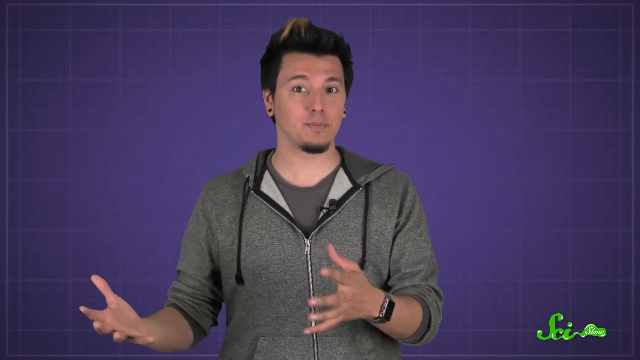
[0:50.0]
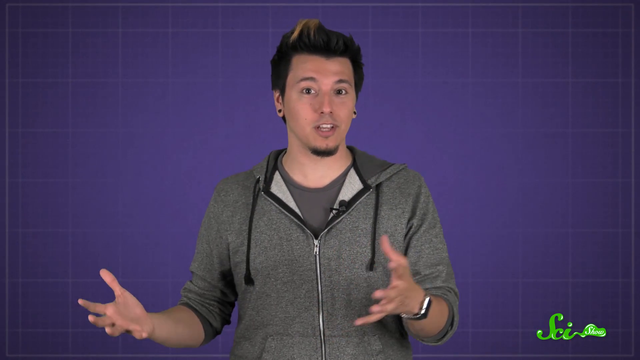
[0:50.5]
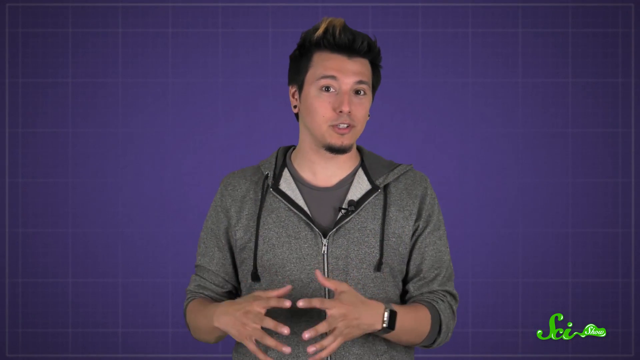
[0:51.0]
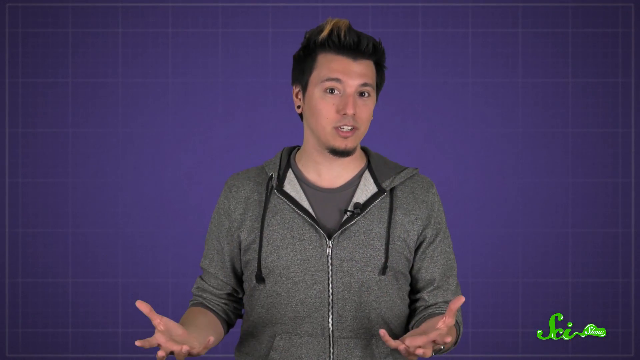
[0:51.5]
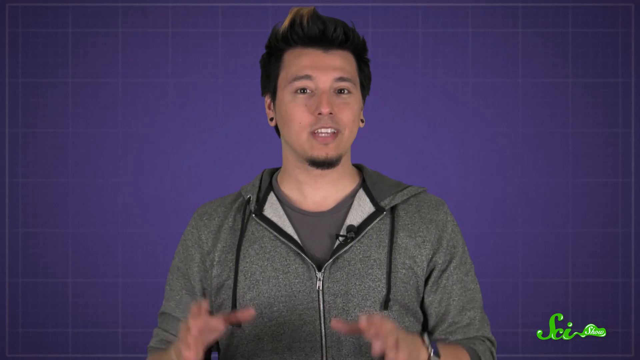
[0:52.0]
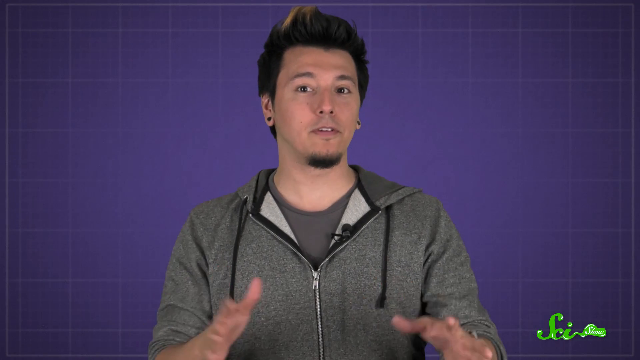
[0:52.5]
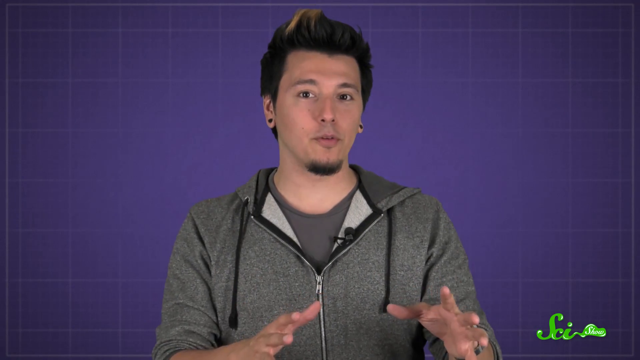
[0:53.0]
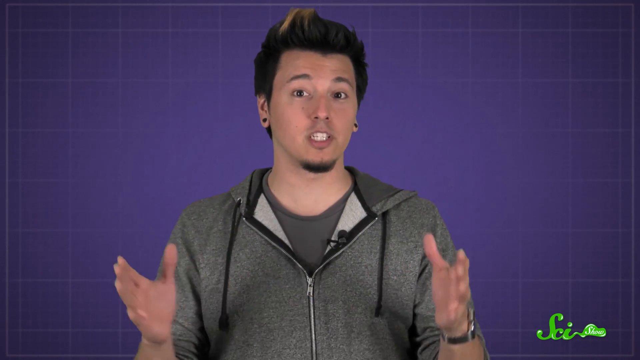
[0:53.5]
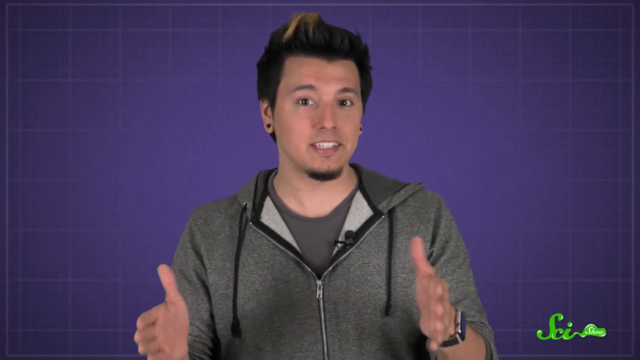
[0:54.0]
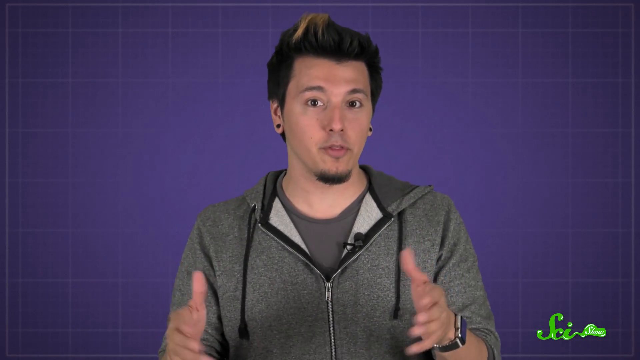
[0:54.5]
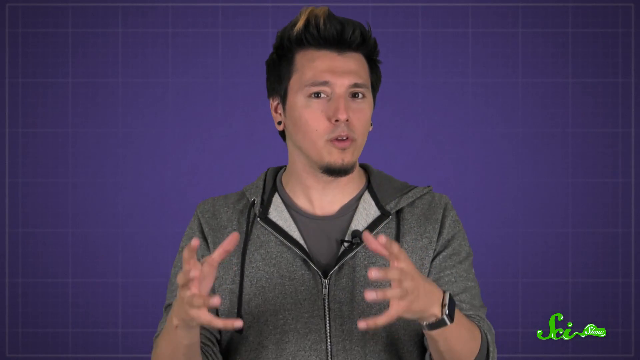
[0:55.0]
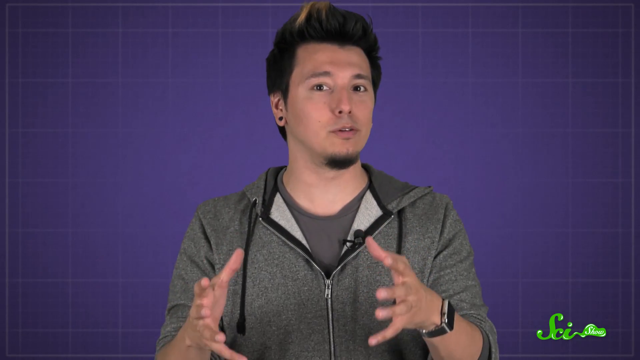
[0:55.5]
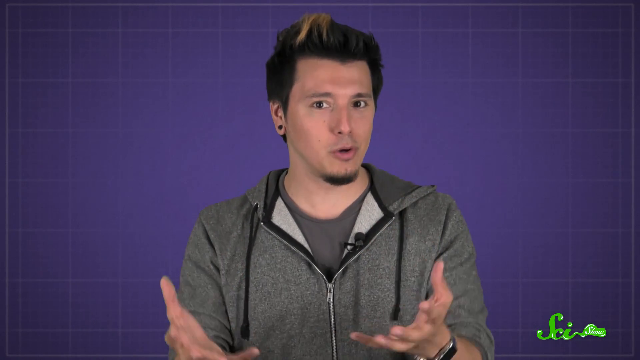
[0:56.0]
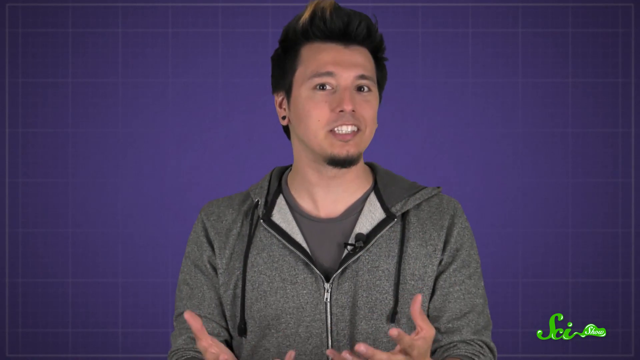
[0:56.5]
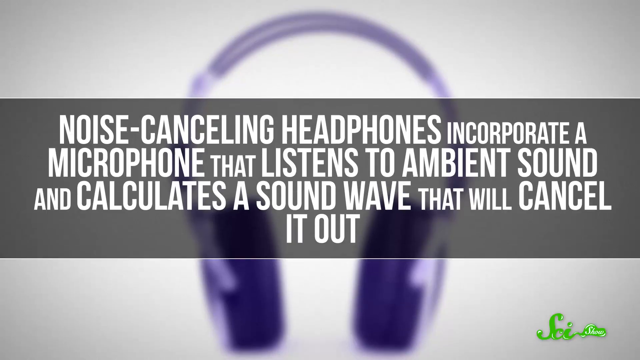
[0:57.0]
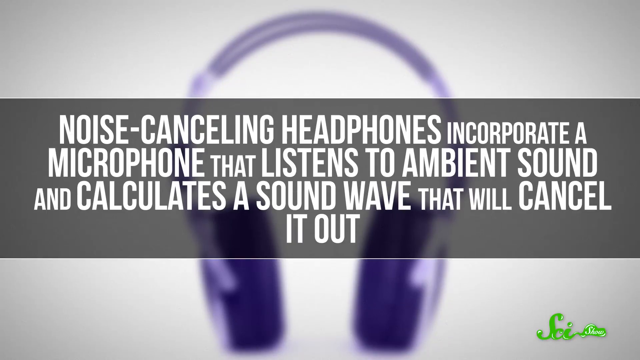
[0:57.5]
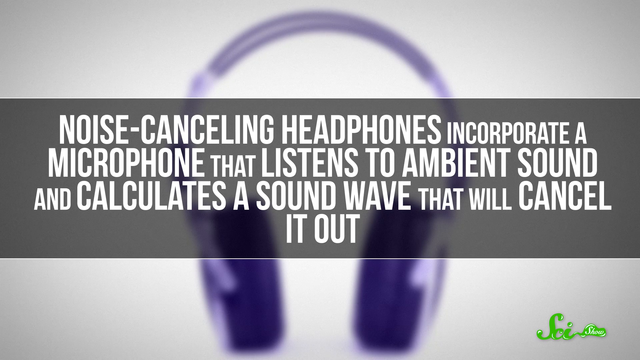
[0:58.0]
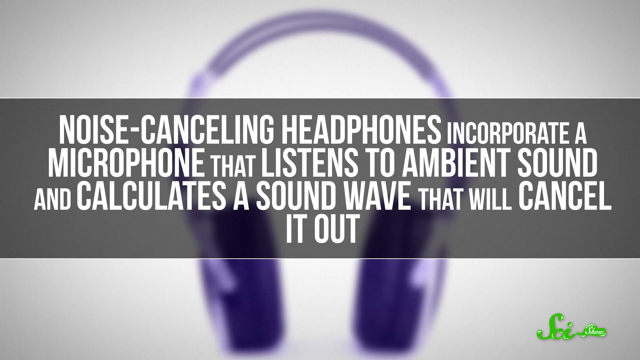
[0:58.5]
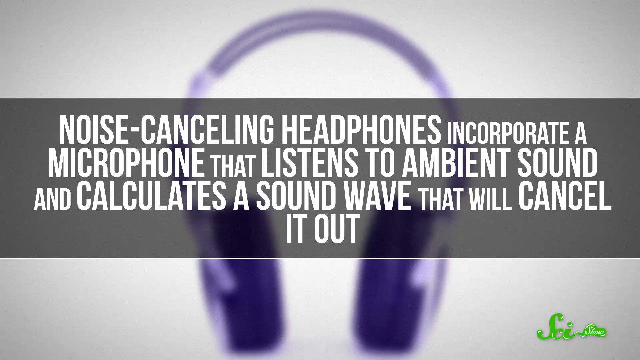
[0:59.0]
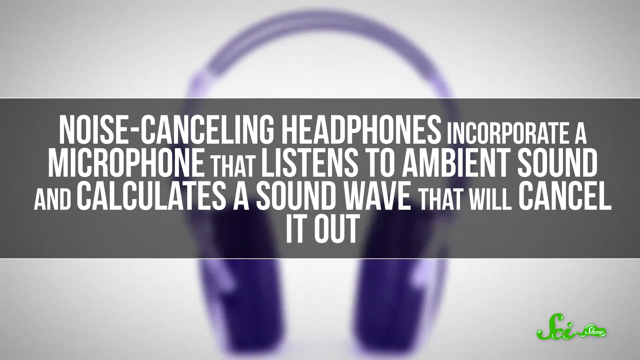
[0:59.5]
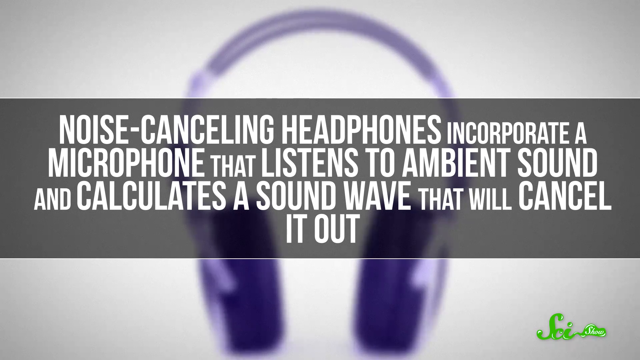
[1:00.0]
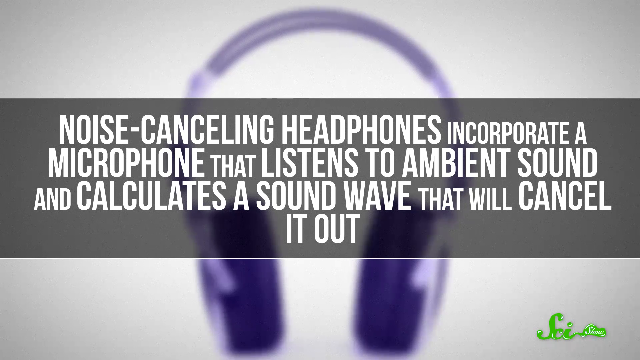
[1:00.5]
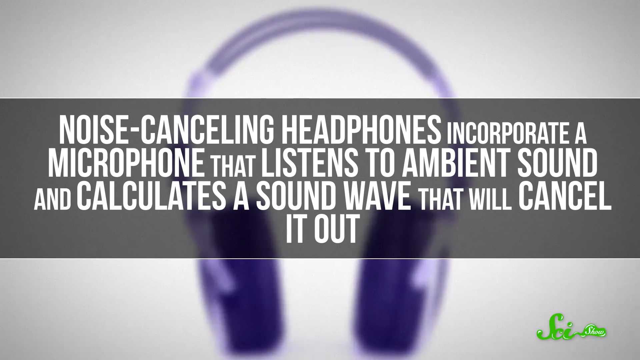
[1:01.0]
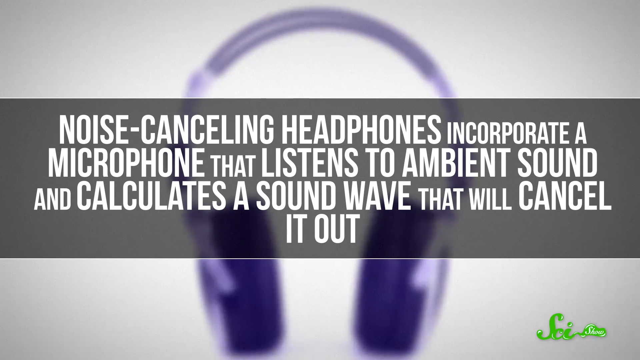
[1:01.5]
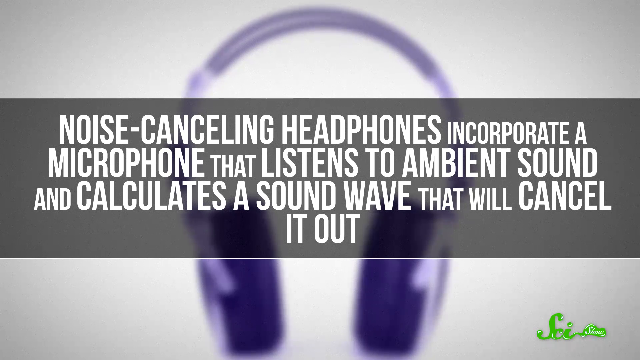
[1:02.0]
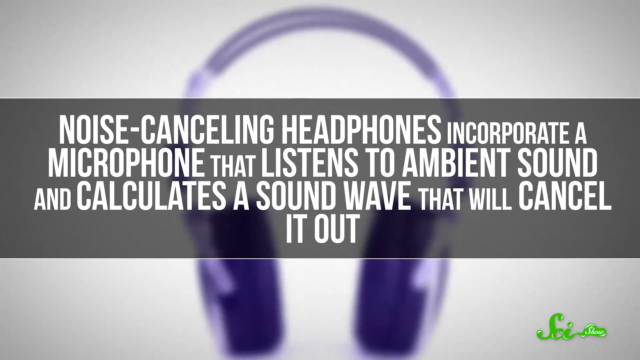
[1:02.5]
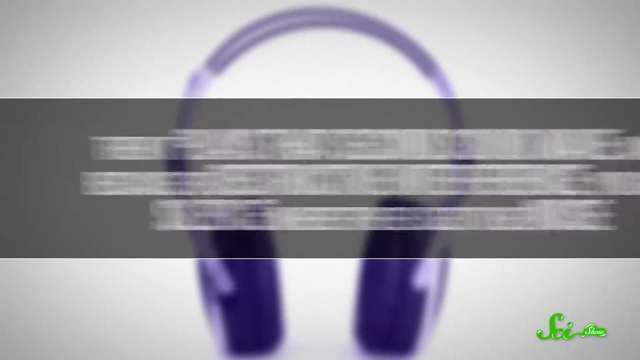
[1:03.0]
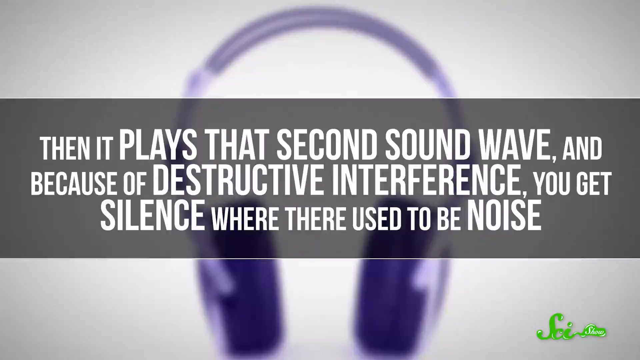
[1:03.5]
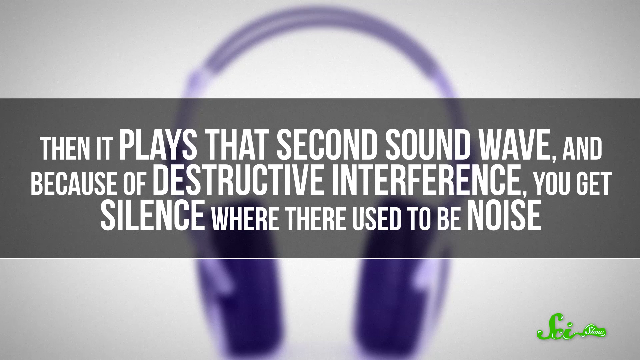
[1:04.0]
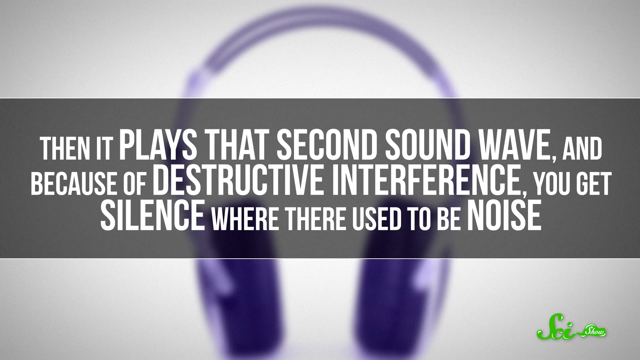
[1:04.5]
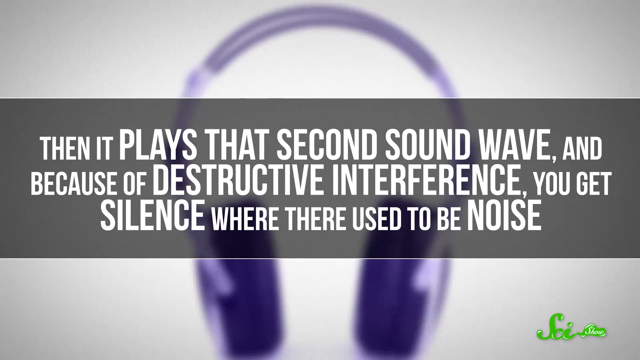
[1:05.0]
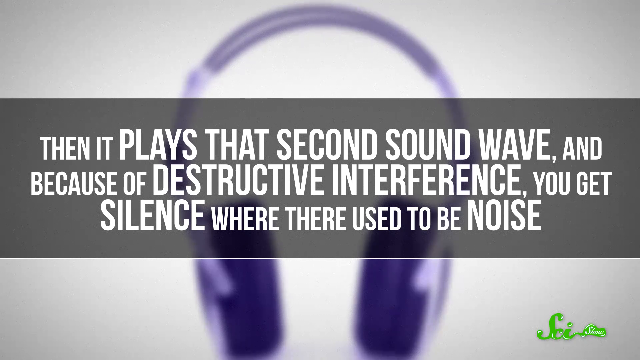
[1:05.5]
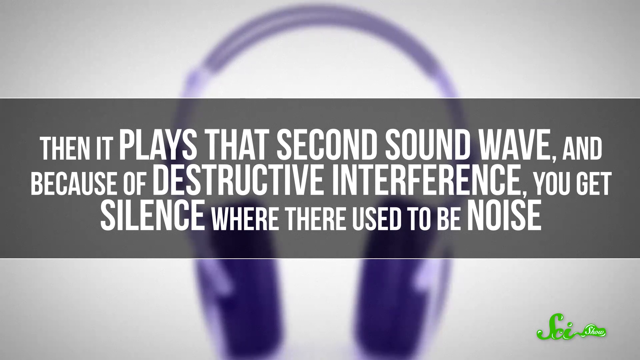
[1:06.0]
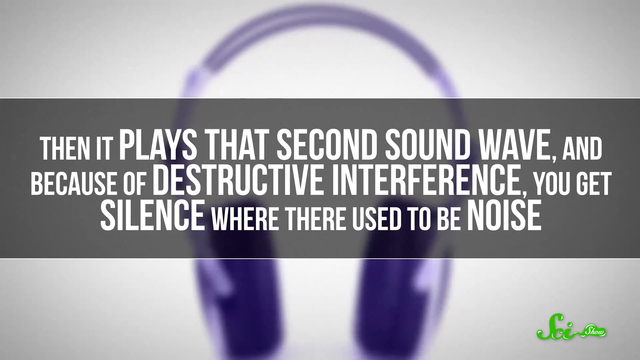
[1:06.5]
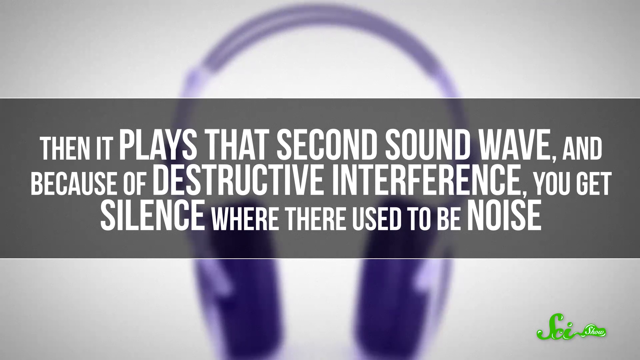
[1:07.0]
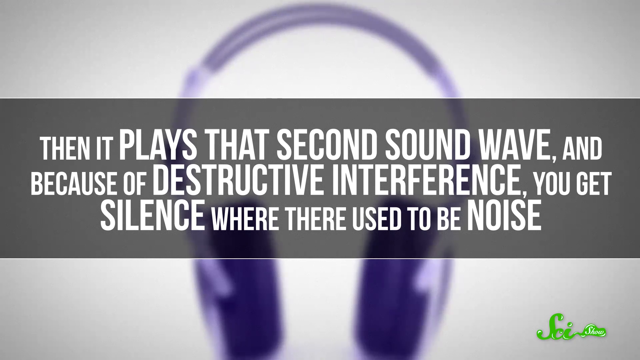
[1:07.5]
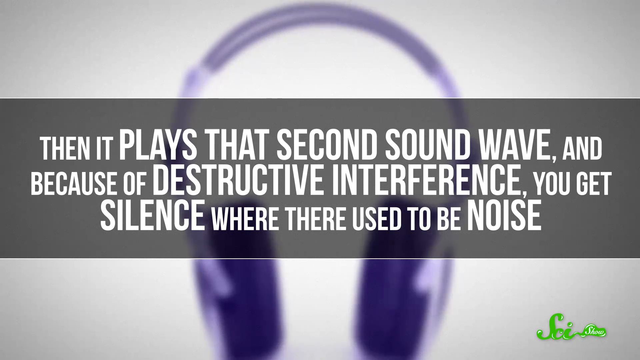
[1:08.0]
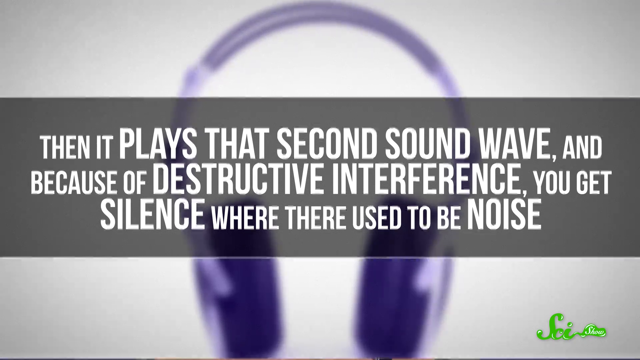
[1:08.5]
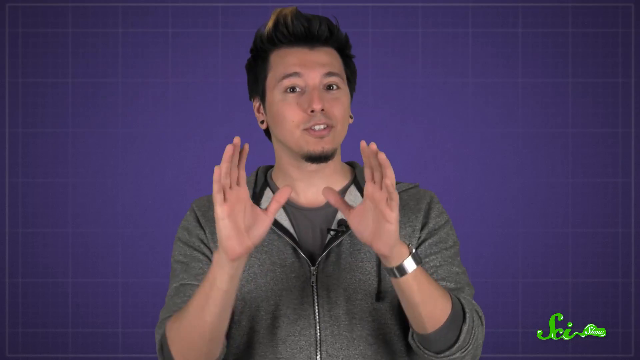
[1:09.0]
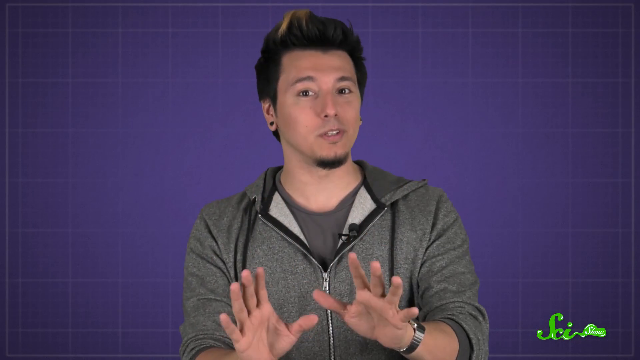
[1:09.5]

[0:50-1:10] The gentleman continues talking in front of the blue background with a lot of hand movement. The SciShow logo is in the right-hand corner, in a very bright green with the "show" part in white lettering on top of the green, in an almost slime-like effect. He wears a gray zip-up hoodie, a darker gray t-shirt, a smartwatch and two black plug earrings, and has short black hair with a little highlight on the left front side, and a black goatee. As he talks, a phrase pops up dead center in white lettering: "noise canceling headphones incorporate a microphone that listens to ambient sound and calculates a sound wave that will cancel it out." Behind it, in the center, is a kind of blurred-out pair of headphones that appear to be a purplish-blue color. Next, text reads "then it plays that second sound wave, and because of the destructive interference, you get silence, where there used to be noise," again dead center in white block lettering. The video then cuts back to the gentleman talking.